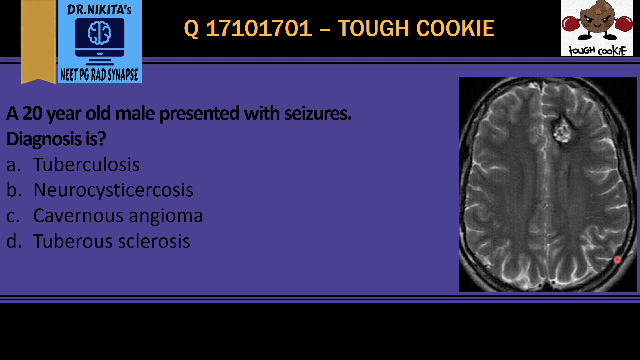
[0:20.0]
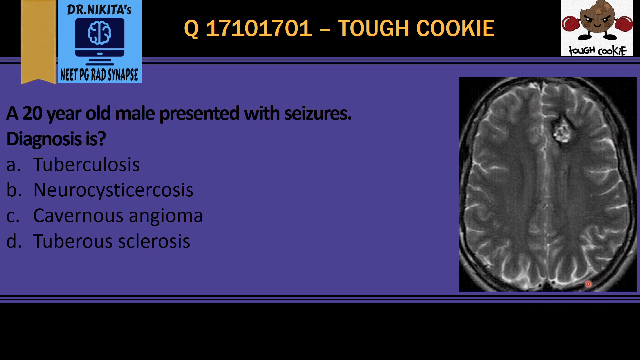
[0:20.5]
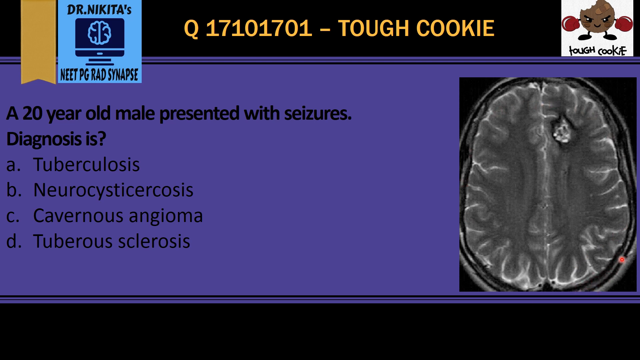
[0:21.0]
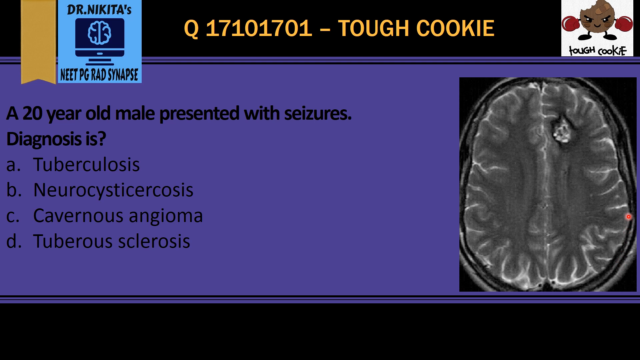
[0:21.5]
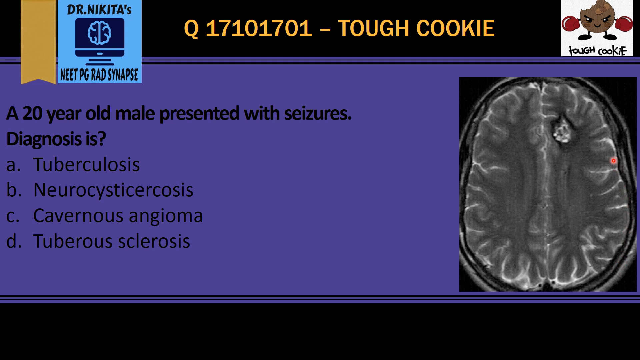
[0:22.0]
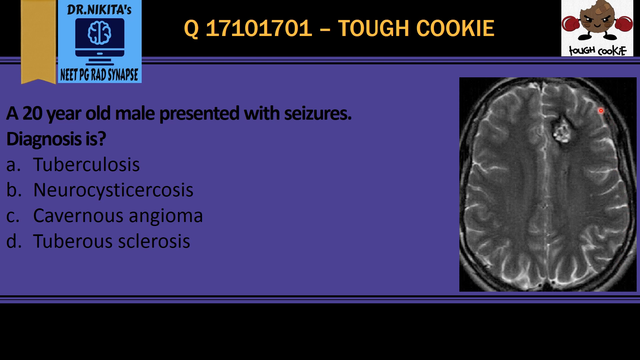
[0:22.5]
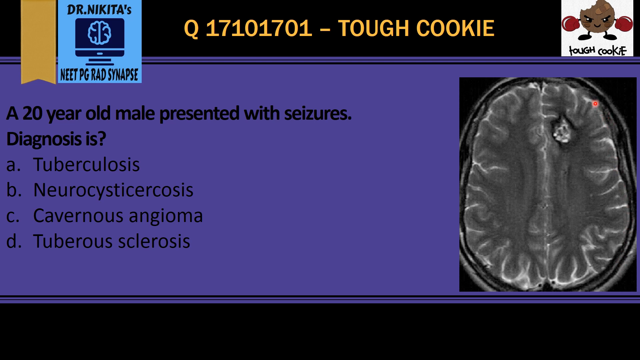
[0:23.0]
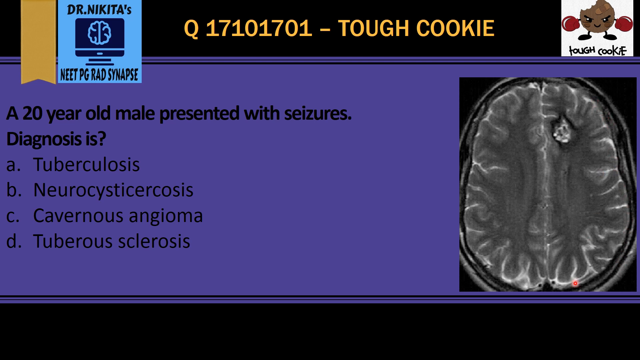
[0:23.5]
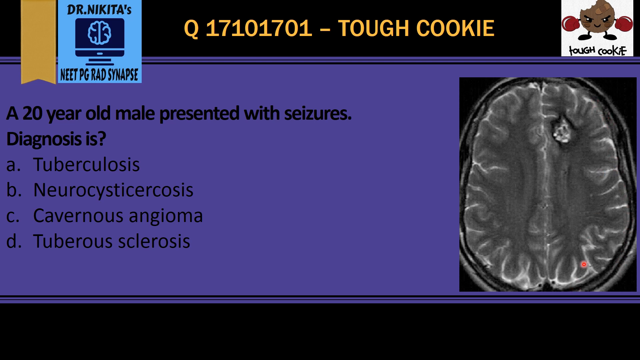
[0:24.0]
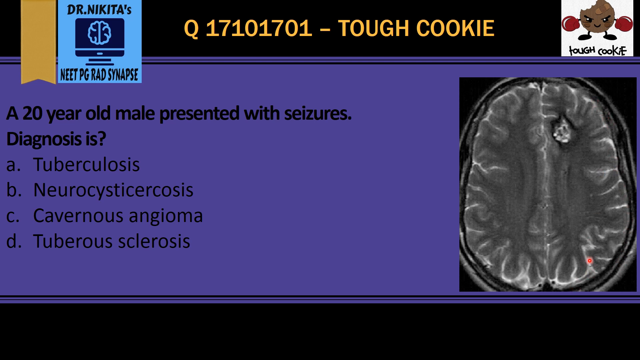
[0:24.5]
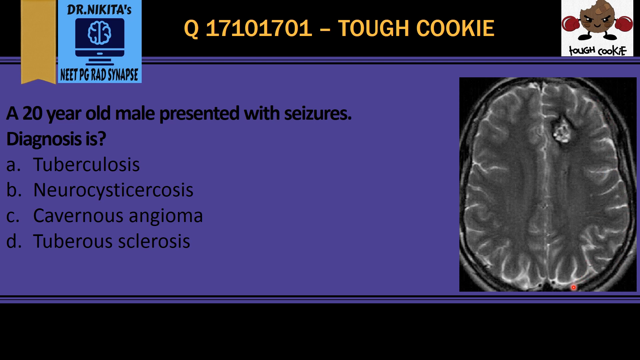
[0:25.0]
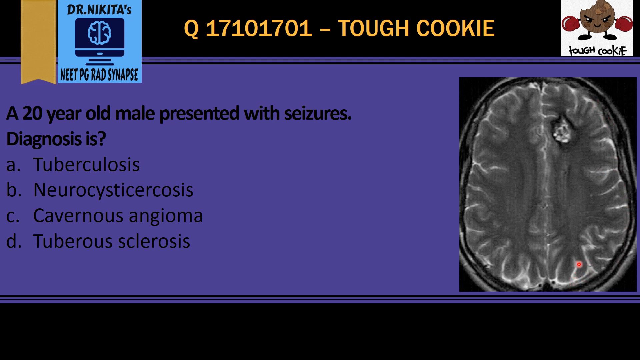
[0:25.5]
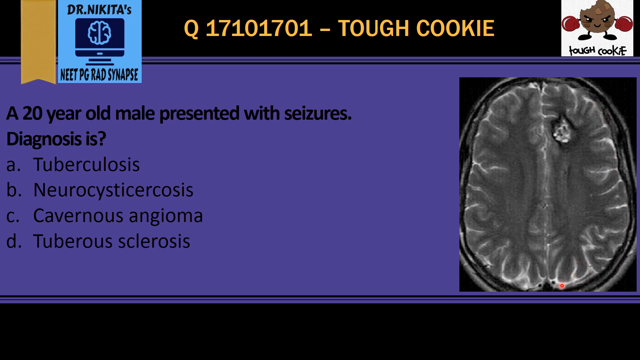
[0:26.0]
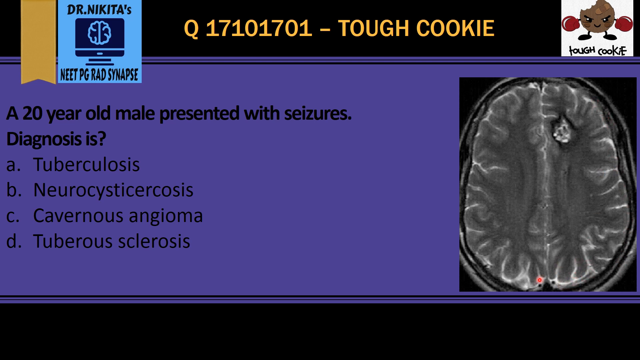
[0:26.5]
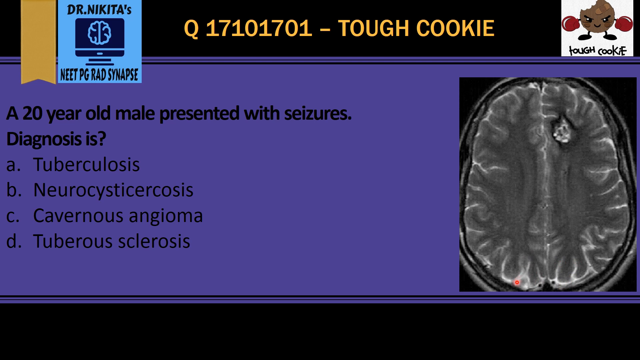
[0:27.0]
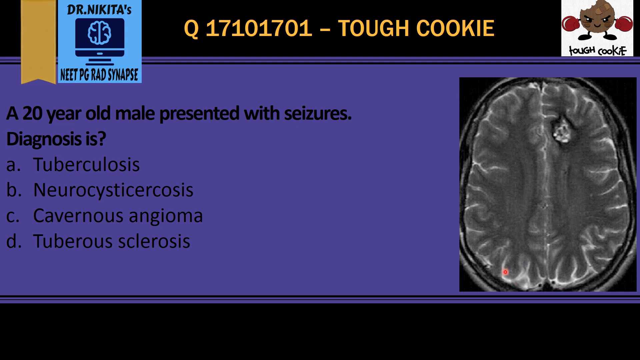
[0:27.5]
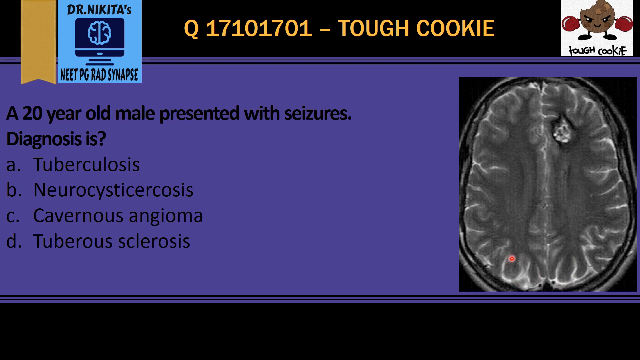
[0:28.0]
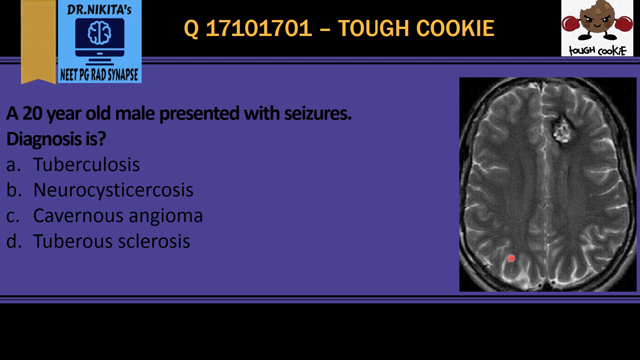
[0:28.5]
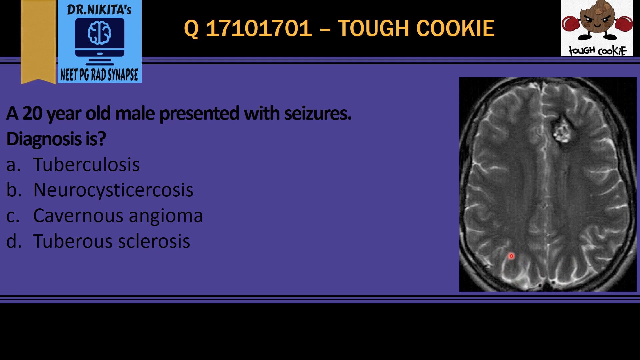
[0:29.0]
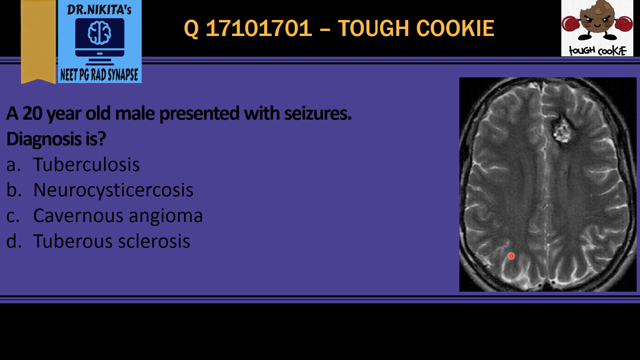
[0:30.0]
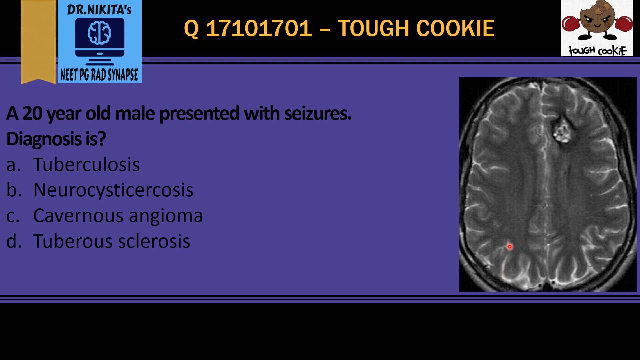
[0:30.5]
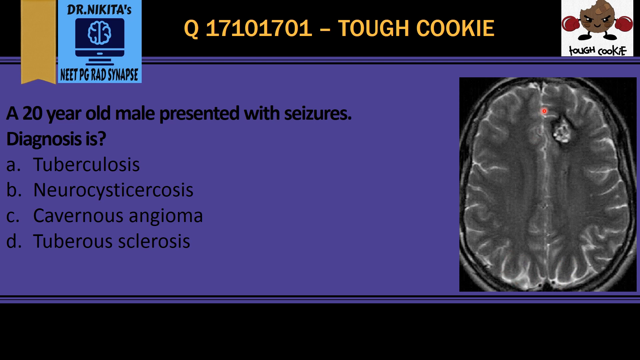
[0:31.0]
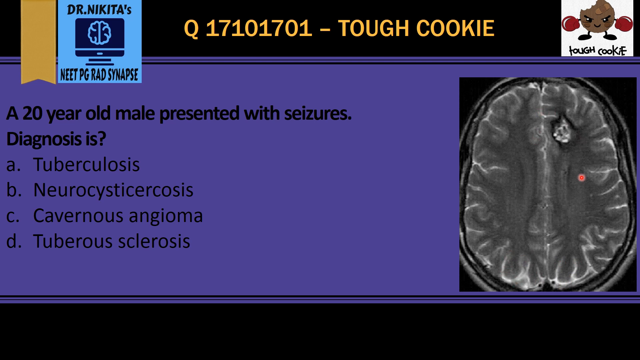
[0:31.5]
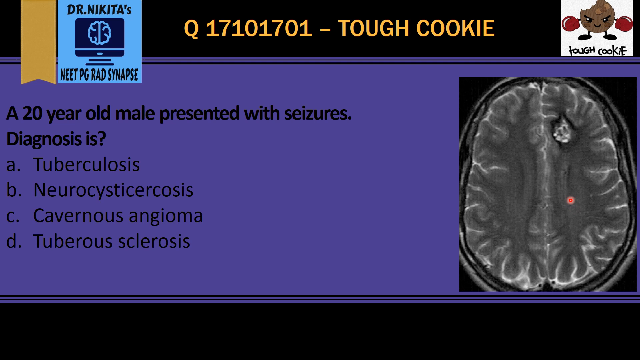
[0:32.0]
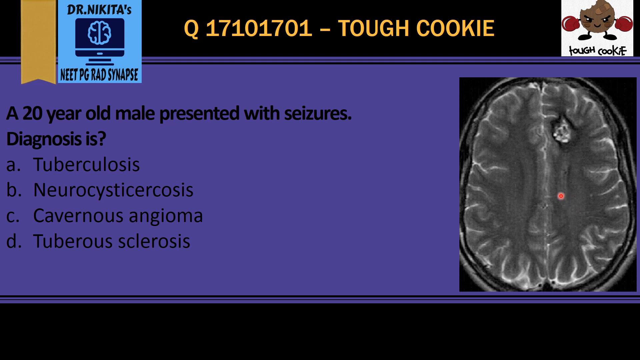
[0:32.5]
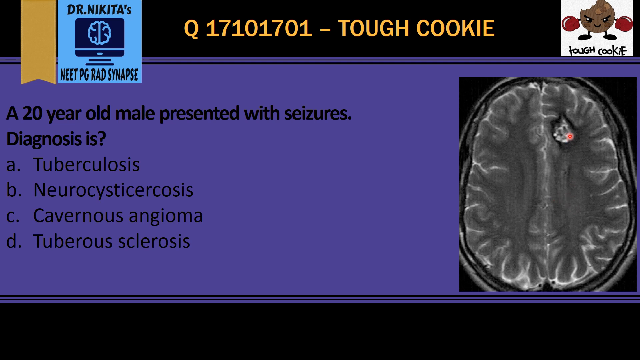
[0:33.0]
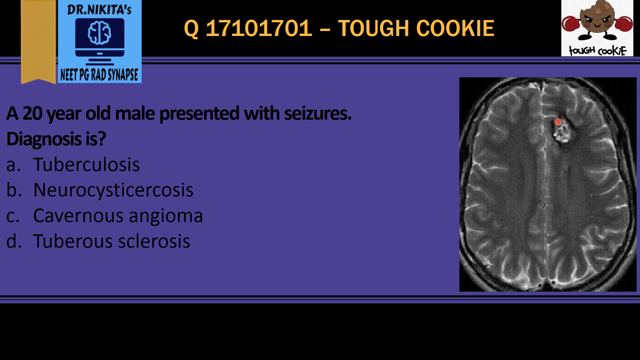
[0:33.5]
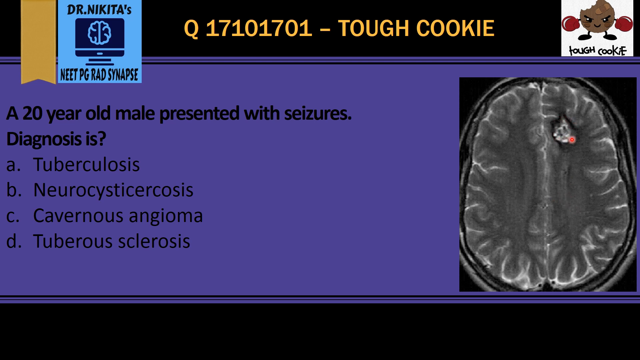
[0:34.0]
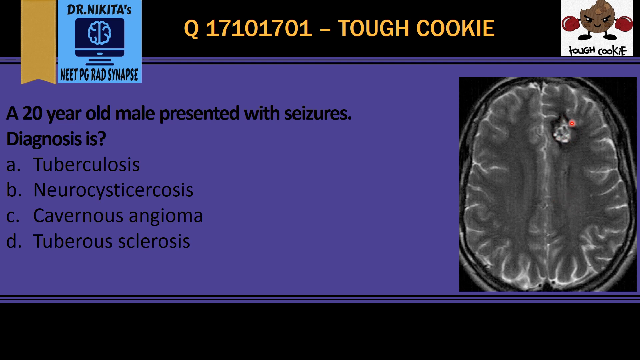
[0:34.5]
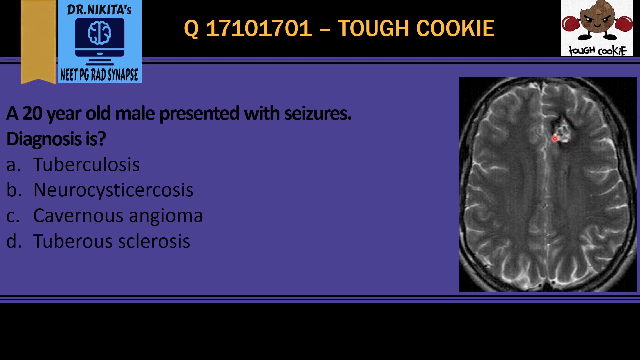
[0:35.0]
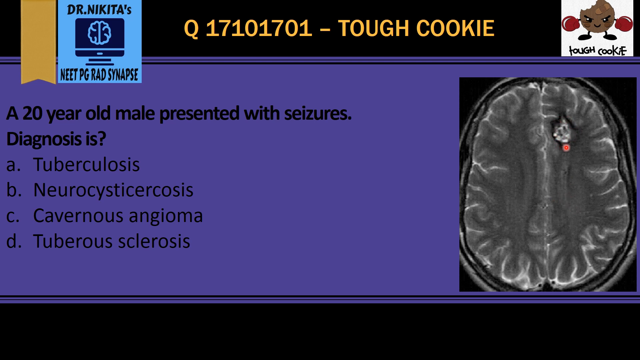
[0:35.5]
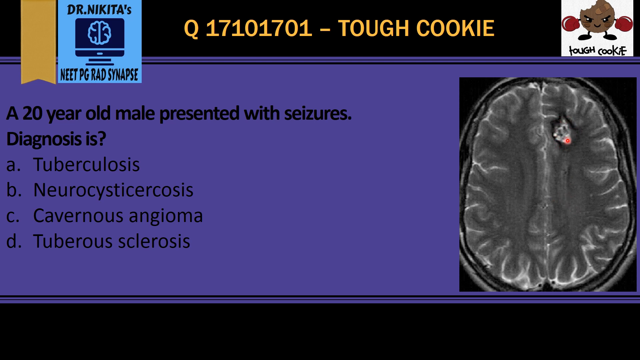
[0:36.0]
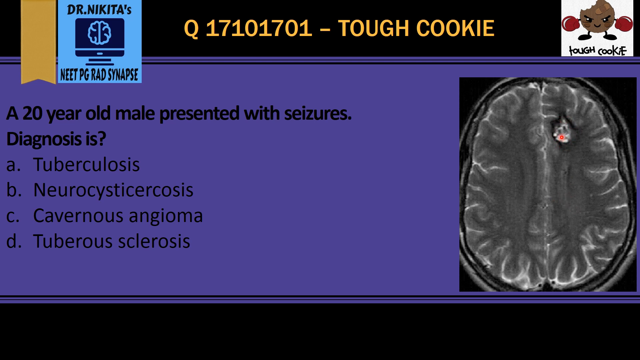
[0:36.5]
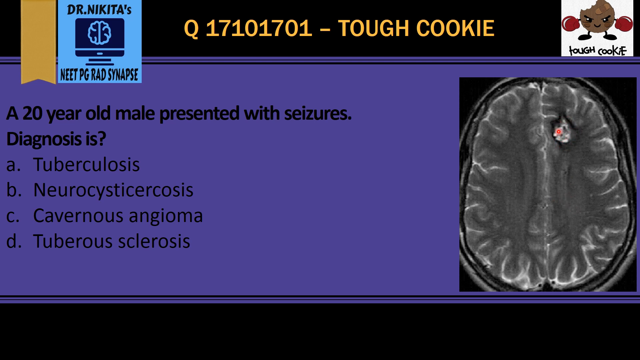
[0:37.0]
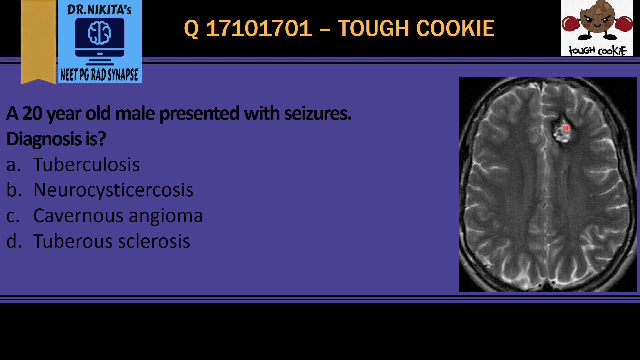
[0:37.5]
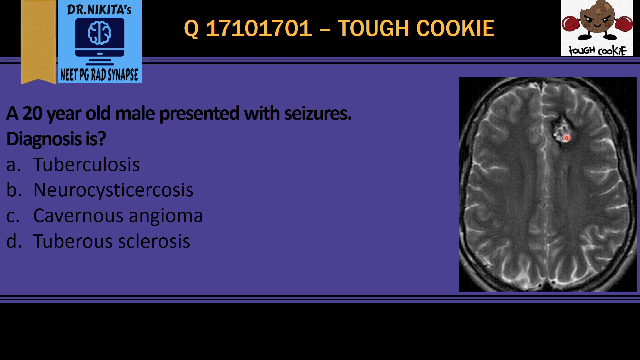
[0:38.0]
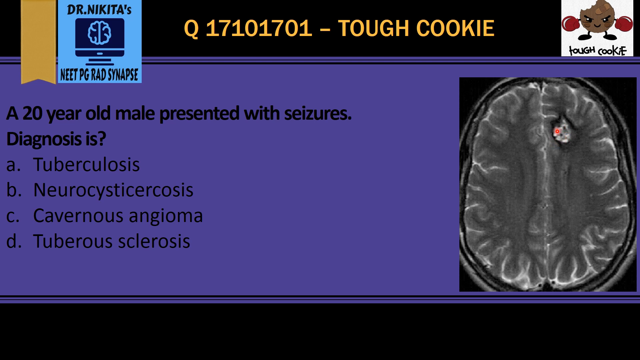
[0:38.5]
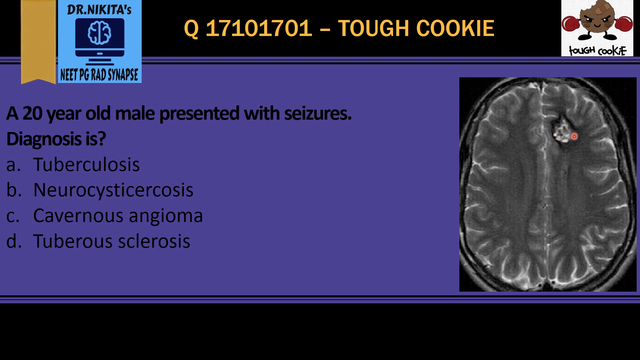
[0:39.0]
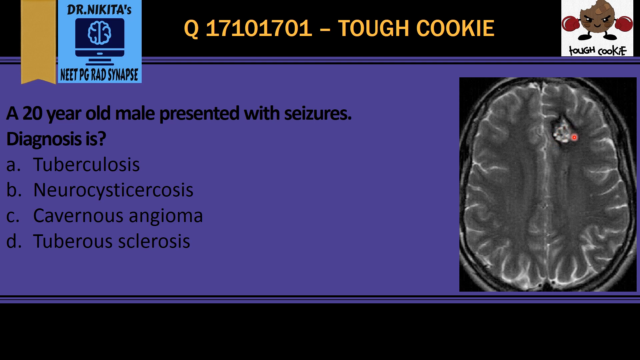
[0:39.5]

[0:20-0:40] The cursor keeps circling the MRI, moving around its right side and then focusing on the bottom, over the lines on the outskirts of the brain. It then points to an abnormality inside the brain, at the top right near the middle. What it is is unclear, possibly some sort of tumor, and the cursor circles around it repeatedly. There is no annotation or label identifying it.